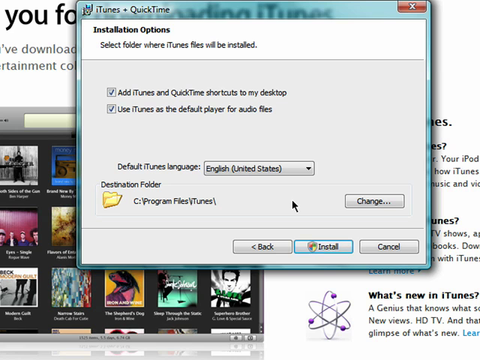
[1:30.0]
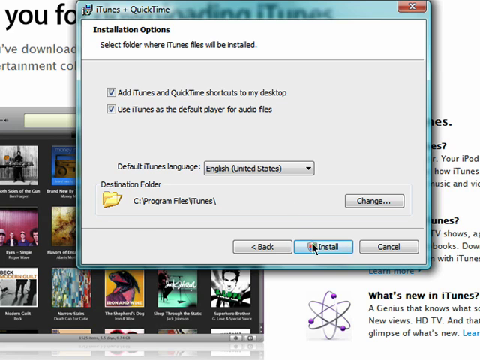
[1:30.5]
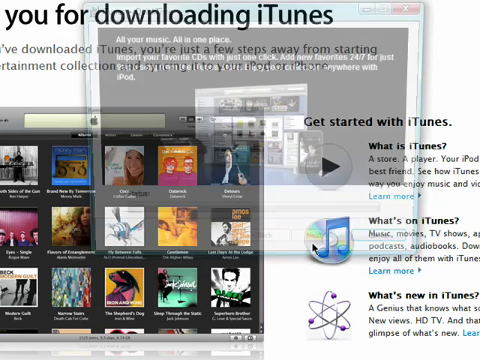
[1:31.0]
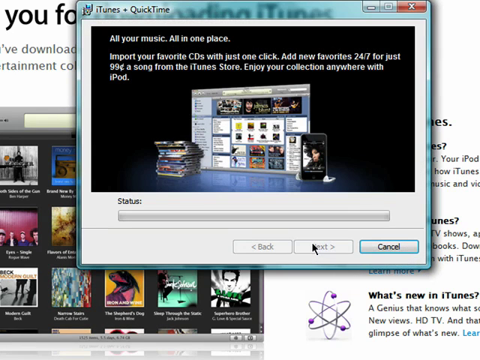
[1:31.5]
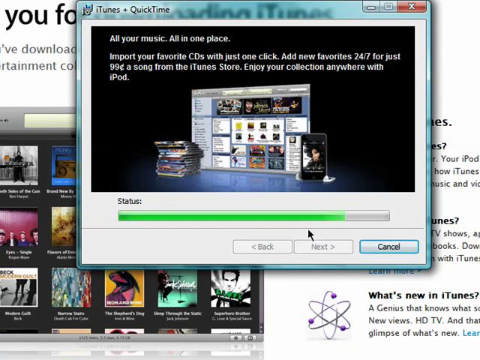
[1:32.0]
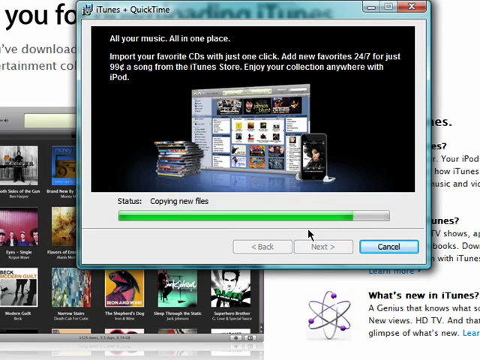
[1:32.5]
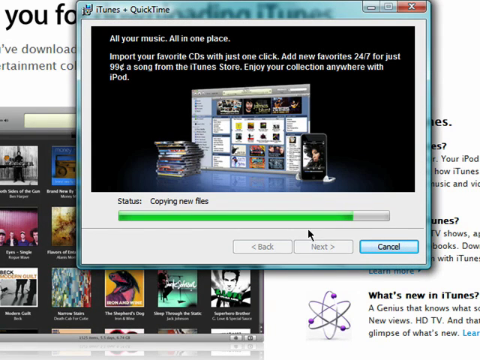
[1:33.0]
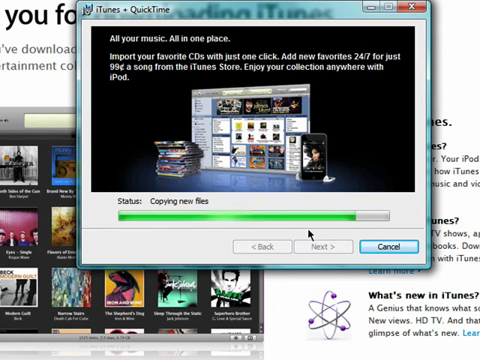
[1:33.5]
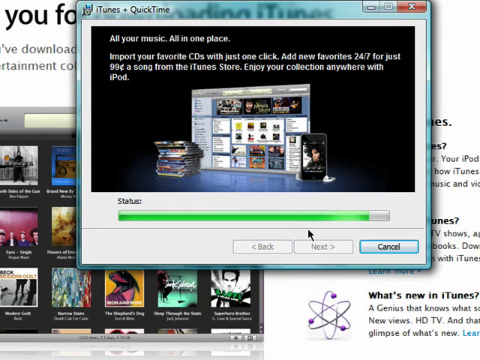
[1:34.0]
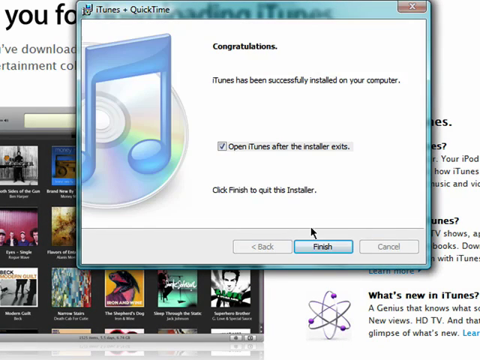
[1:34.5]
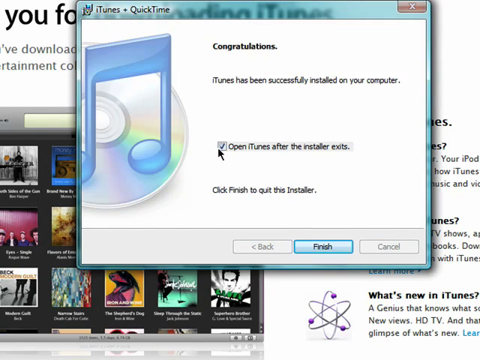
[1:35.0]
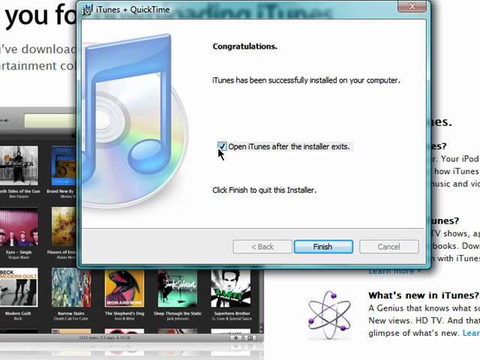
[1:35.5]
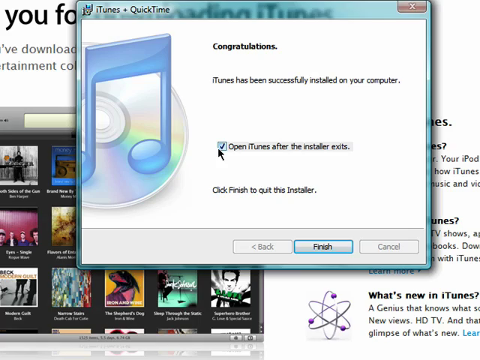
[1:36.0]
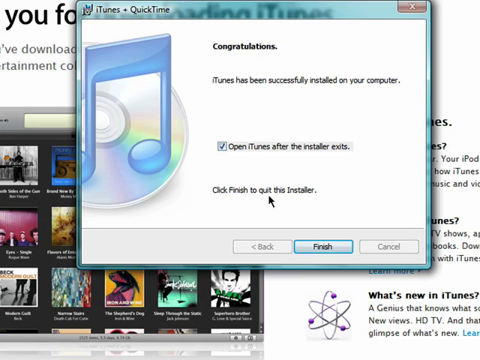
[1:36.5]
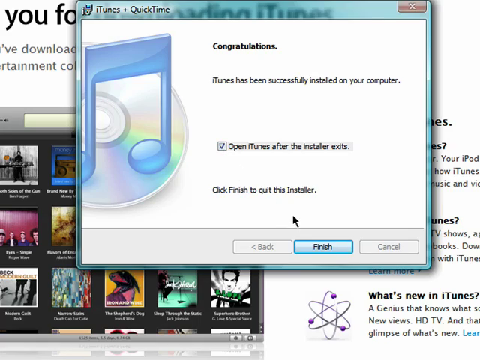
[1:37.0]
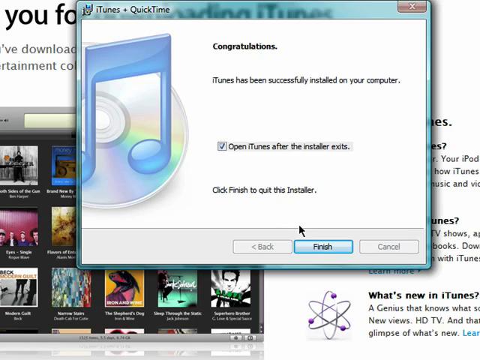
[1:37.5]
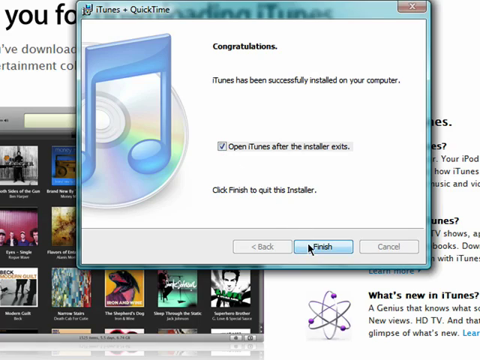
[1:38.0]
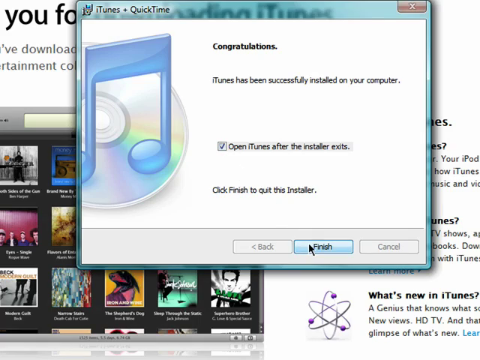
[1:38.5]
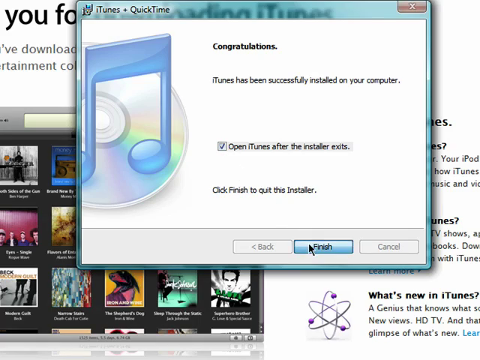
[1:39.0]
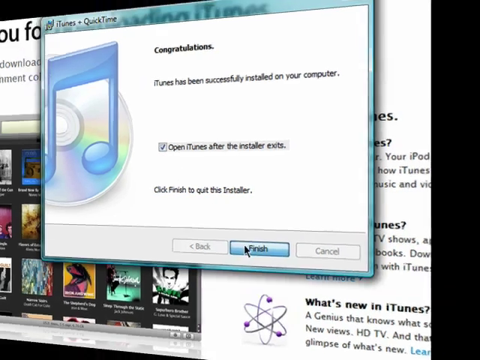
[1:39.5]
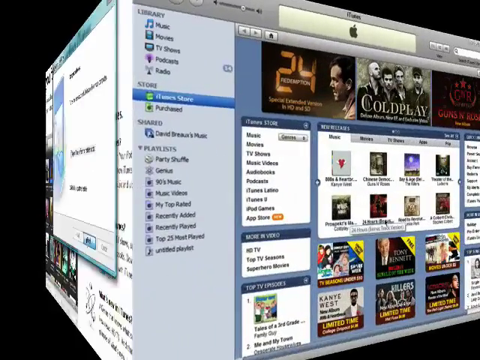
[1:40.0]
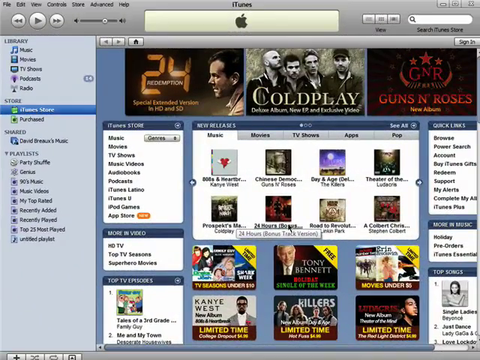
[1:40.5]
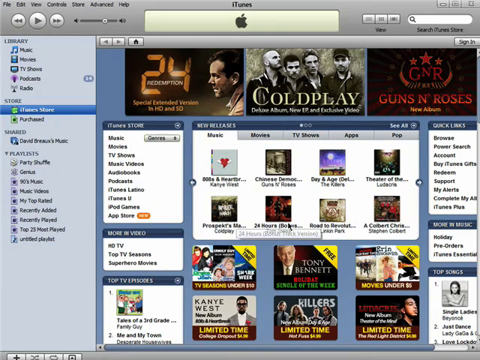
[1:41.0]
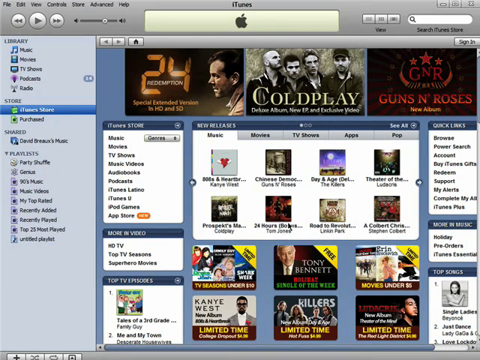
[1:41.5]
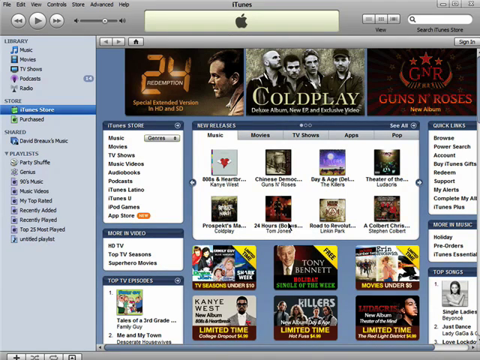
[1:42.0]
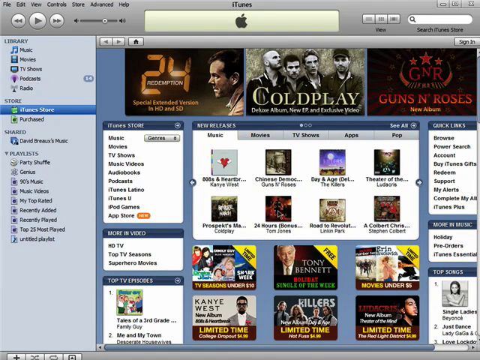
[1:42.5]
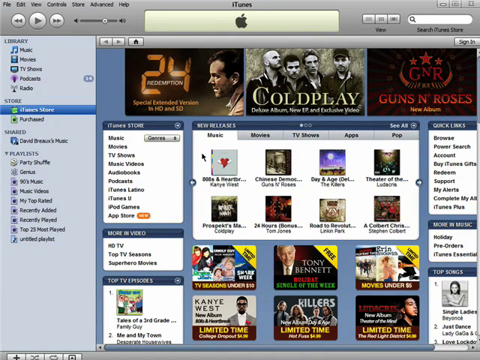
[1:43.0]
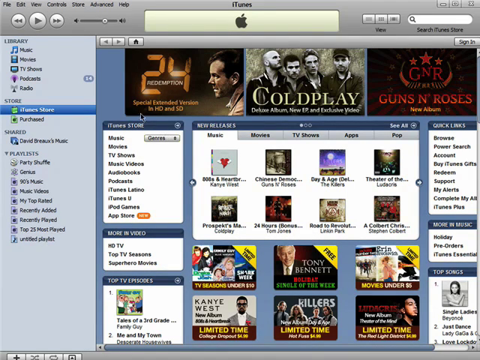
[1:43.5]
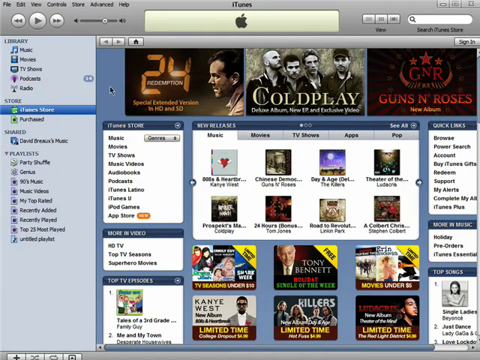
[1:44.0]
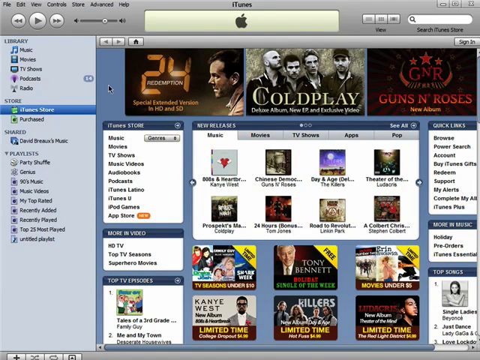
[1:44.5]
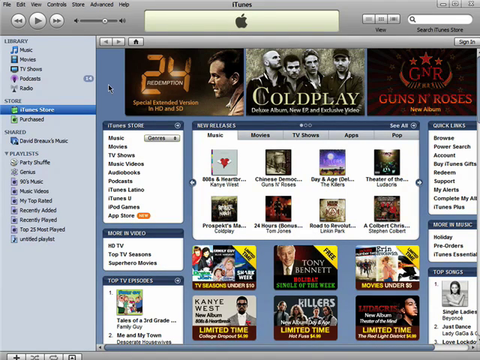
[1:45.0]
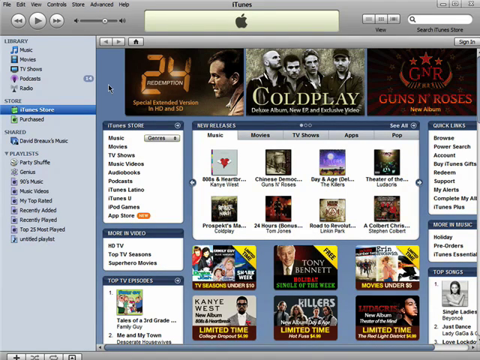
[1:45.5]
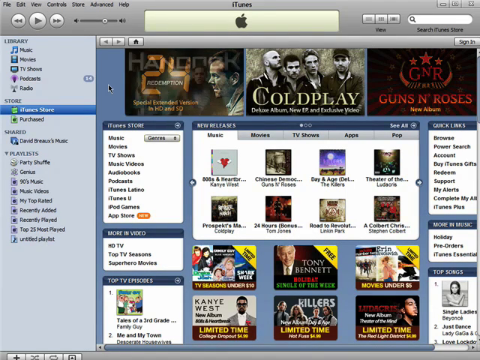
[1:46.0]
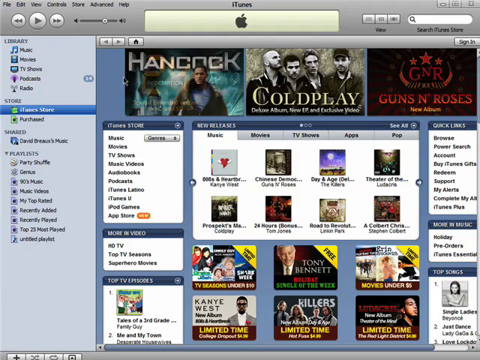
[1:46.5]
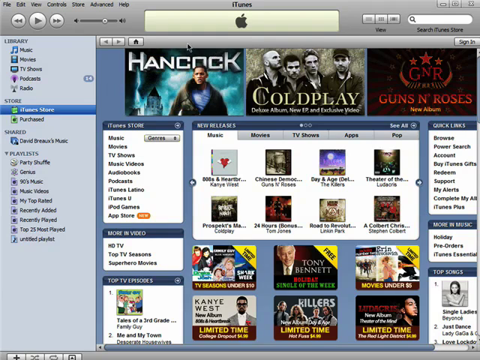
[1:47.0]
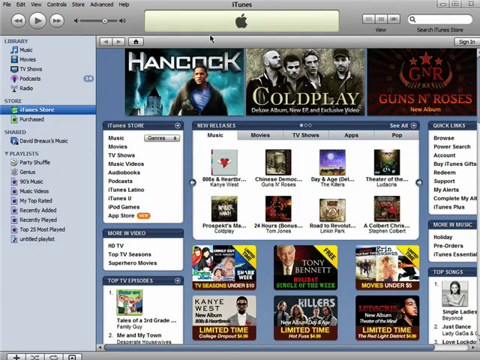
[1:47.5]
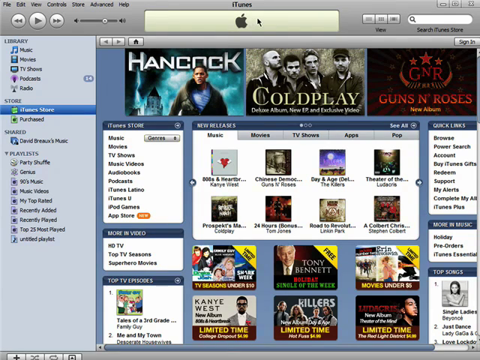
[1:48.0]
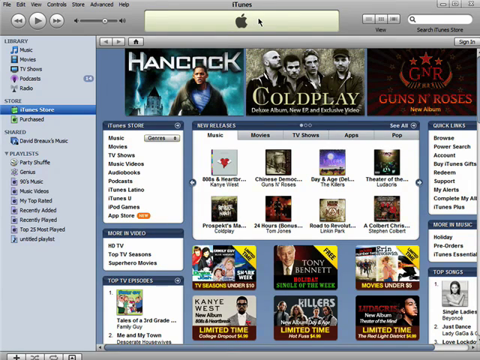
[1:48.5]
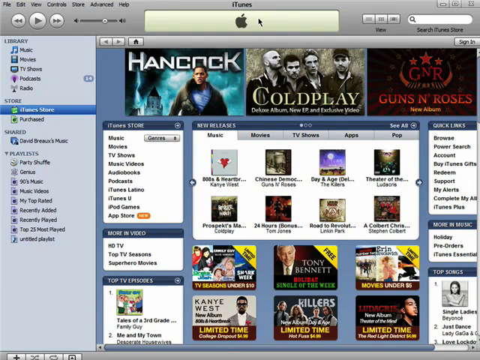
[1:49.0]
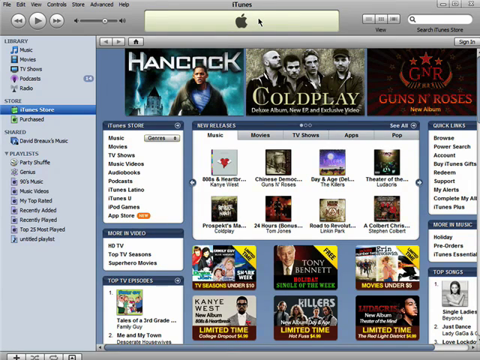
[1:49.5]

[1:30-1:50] The pop-up is still in the upper left-hand corner, reading "iTunes + QuickTime." There are two checkboxes: "add iTunes and QuickTime shortcuts to my desktop" and "use iTunes as the default player for audio files." The default iTunes language is English (United States), and the destination folder reads "C/program/file/iTunes," with a "Change" button. There are Back, Install and Cancel buttons, with Install already highlighted. The person clicks Install, and the screen says "all your music are in one place" and shows a status. When it is done, it says "open iTunes after installer exits," and then "complete." iTunes then appears, showing Coldplay, Guns N' Roses, and "24 Redemption," apparently a show.